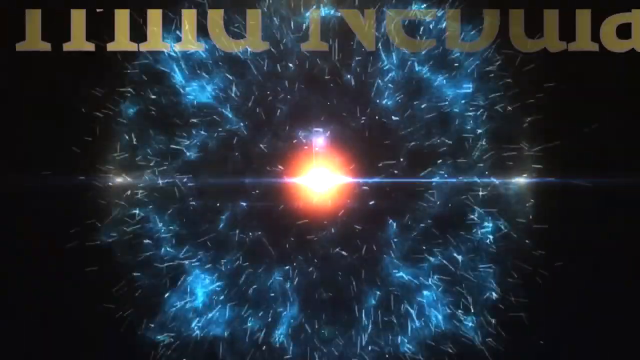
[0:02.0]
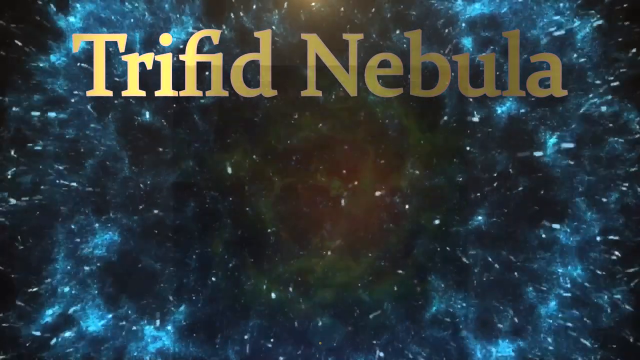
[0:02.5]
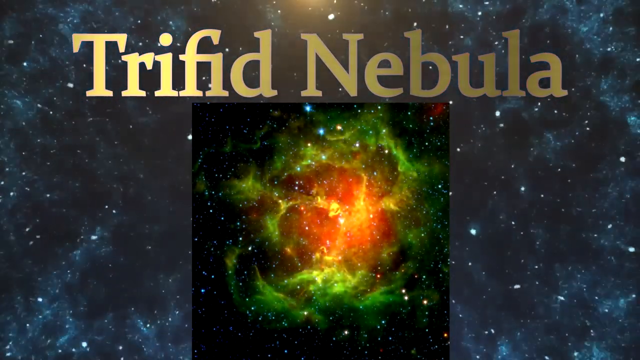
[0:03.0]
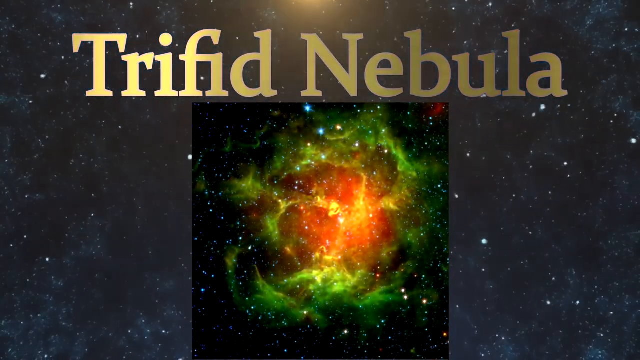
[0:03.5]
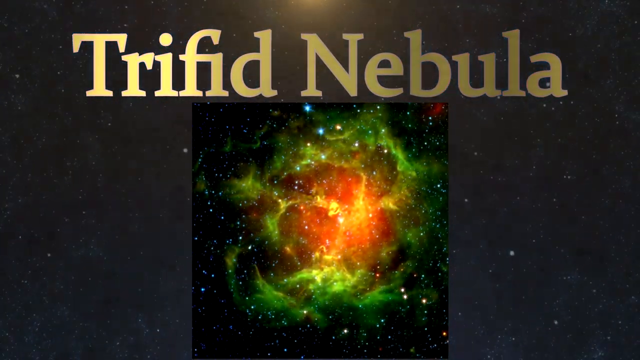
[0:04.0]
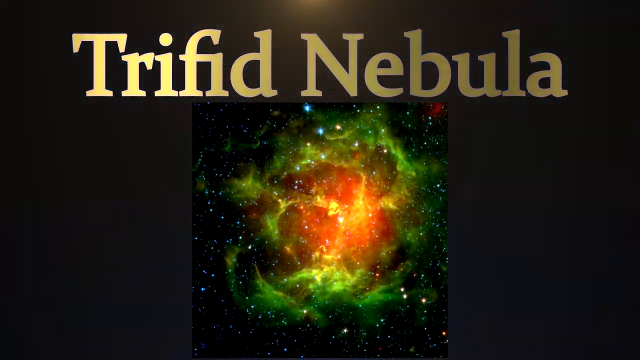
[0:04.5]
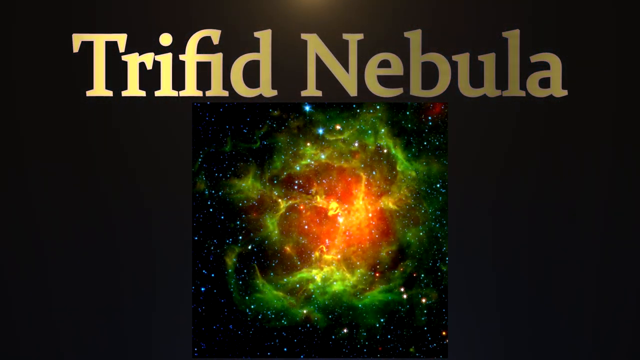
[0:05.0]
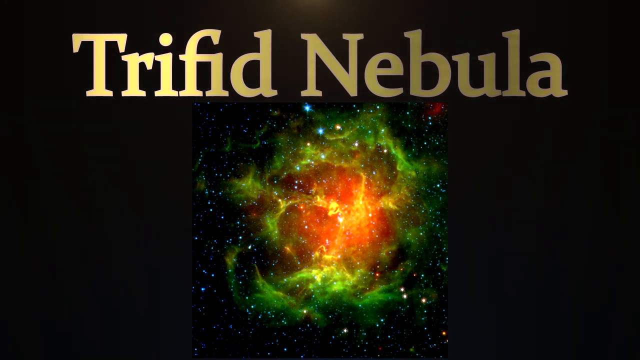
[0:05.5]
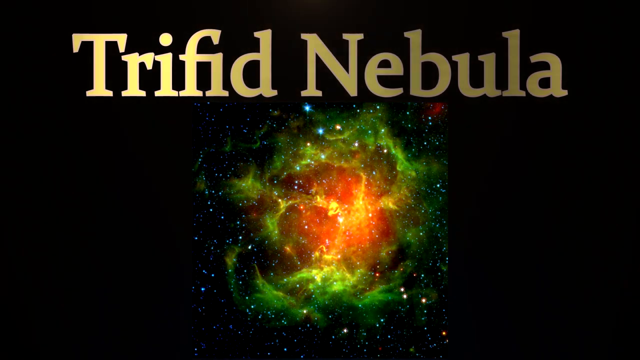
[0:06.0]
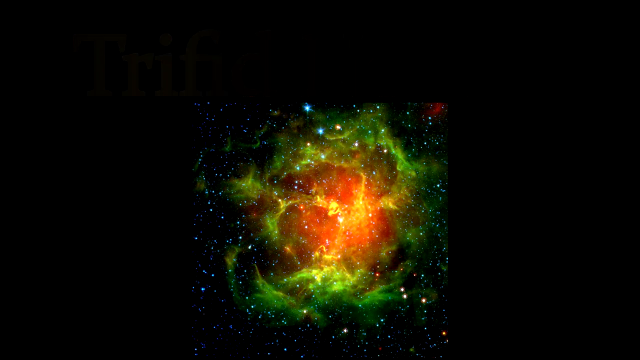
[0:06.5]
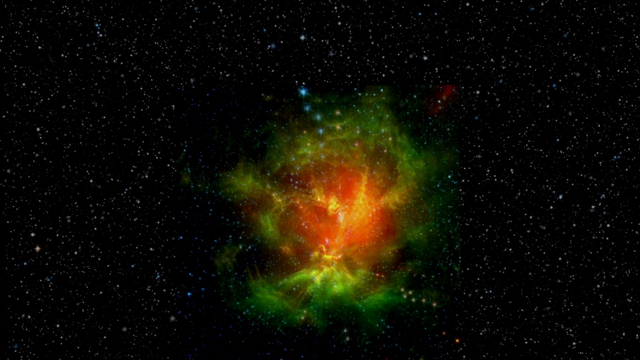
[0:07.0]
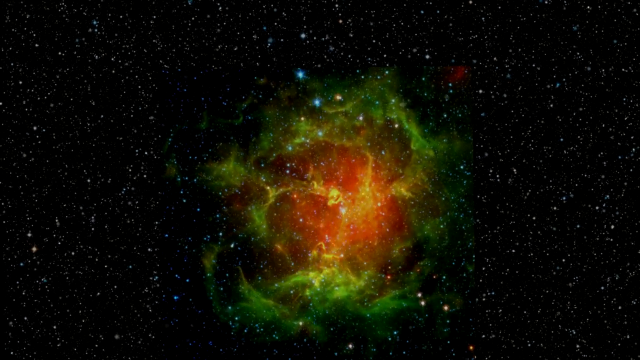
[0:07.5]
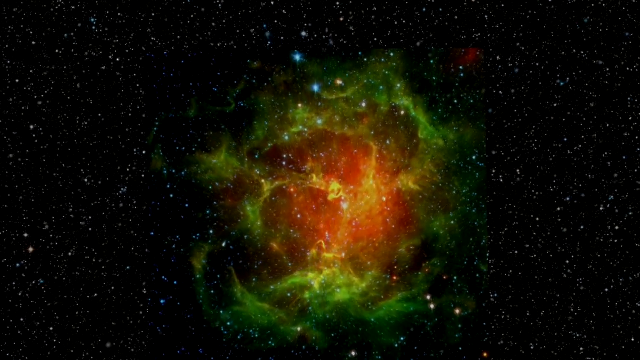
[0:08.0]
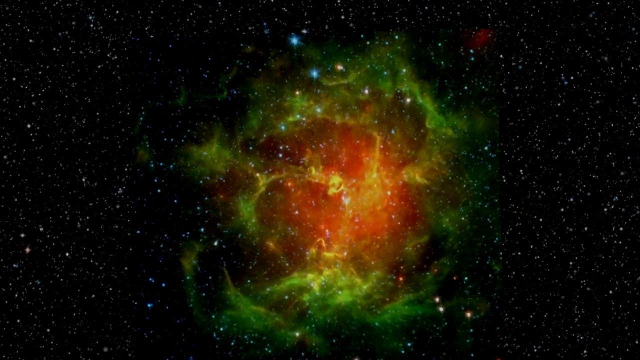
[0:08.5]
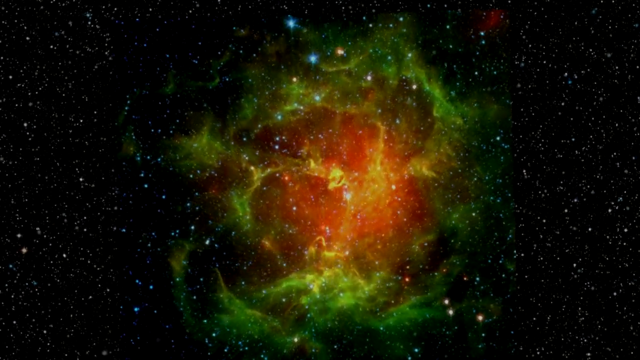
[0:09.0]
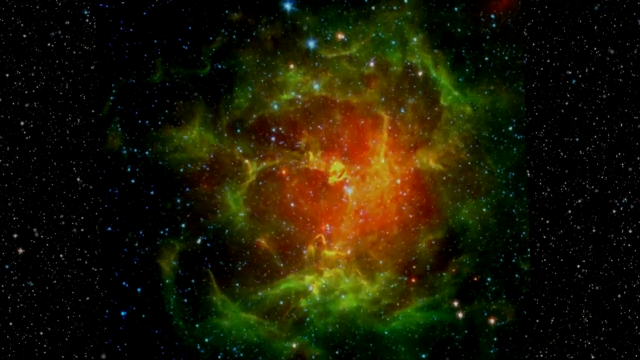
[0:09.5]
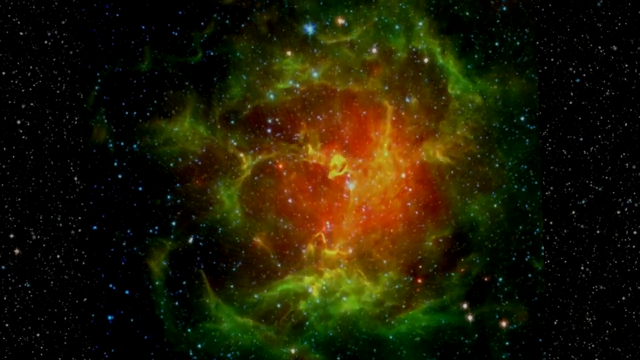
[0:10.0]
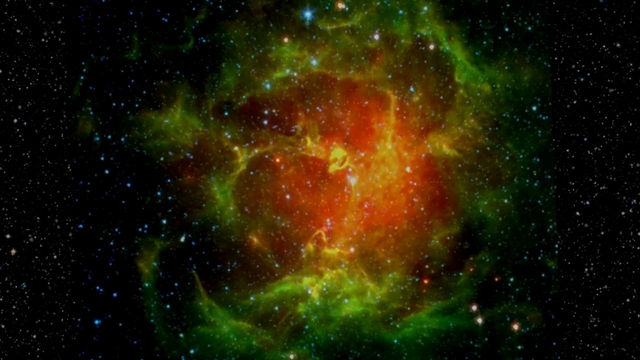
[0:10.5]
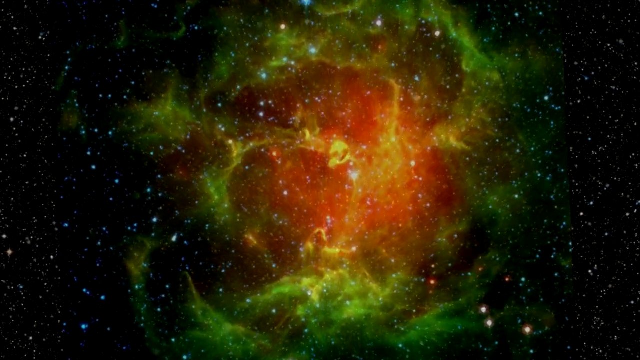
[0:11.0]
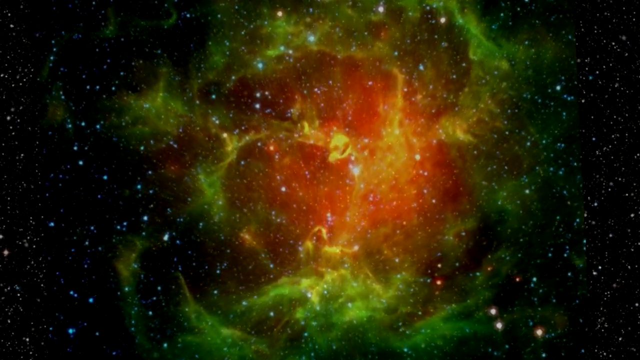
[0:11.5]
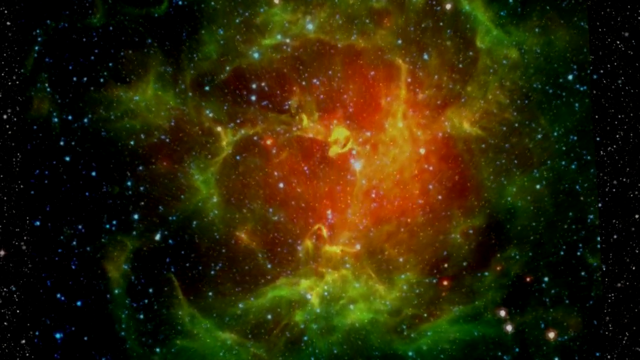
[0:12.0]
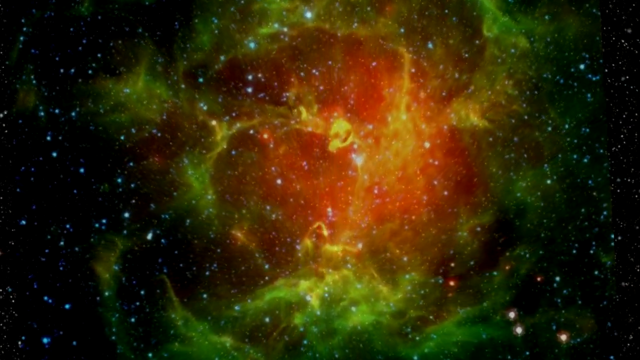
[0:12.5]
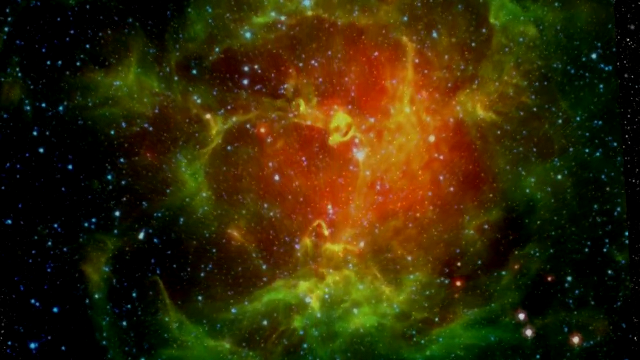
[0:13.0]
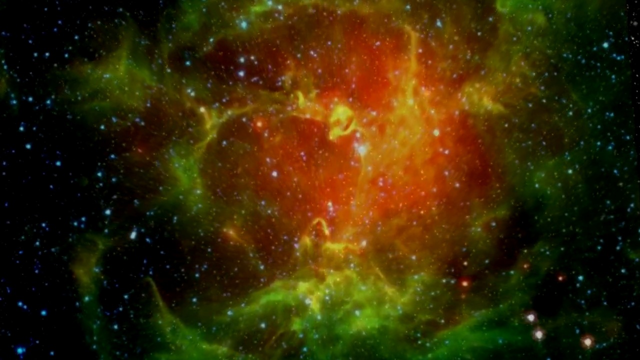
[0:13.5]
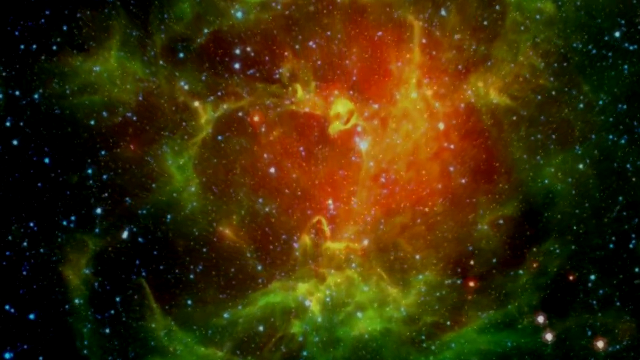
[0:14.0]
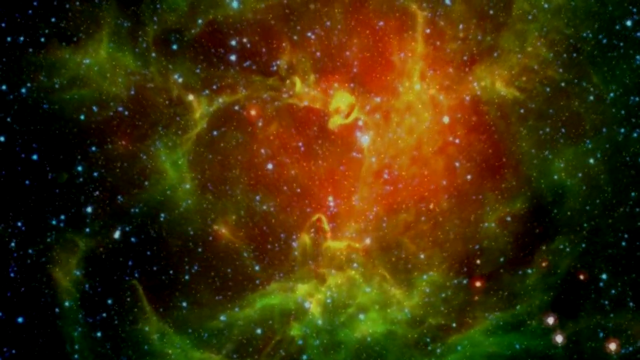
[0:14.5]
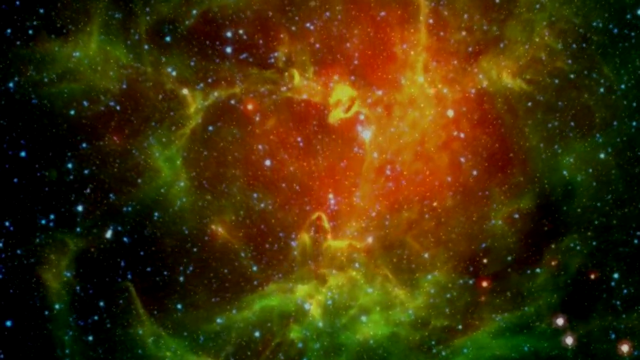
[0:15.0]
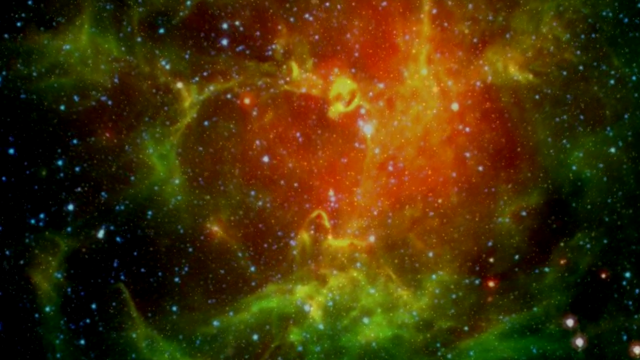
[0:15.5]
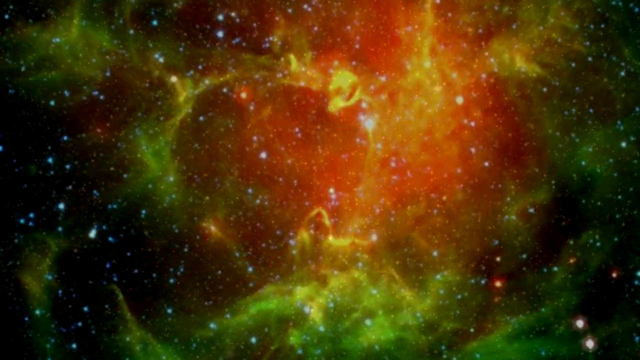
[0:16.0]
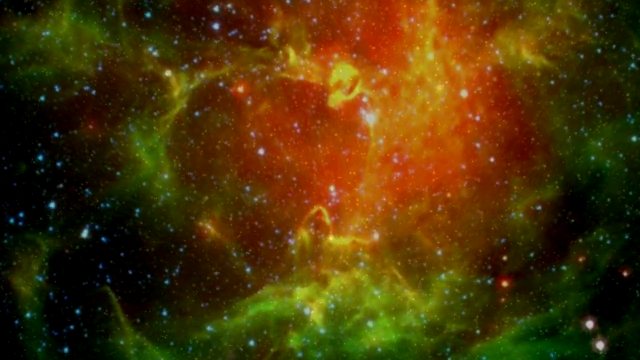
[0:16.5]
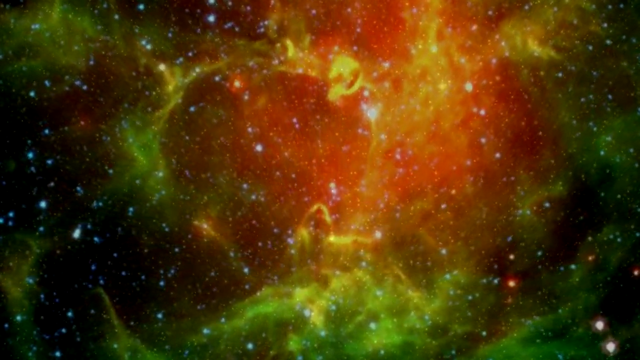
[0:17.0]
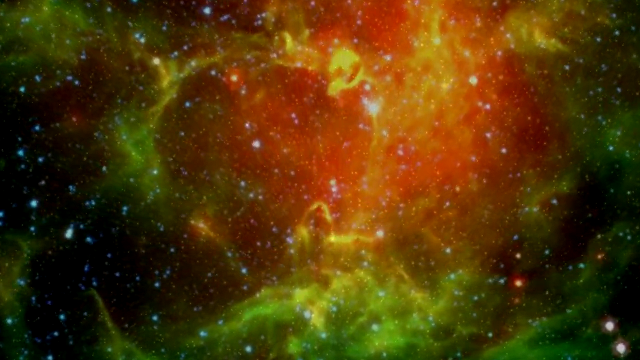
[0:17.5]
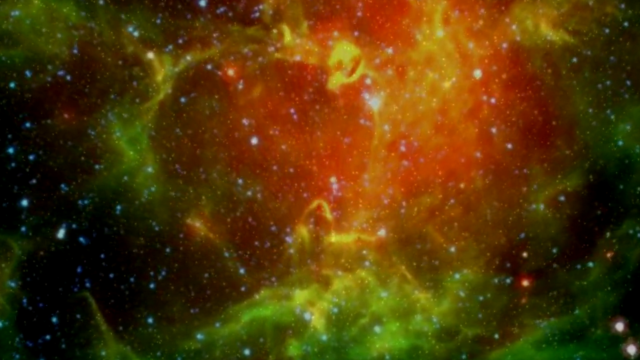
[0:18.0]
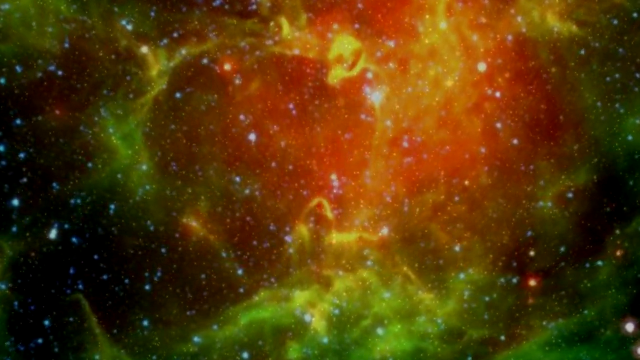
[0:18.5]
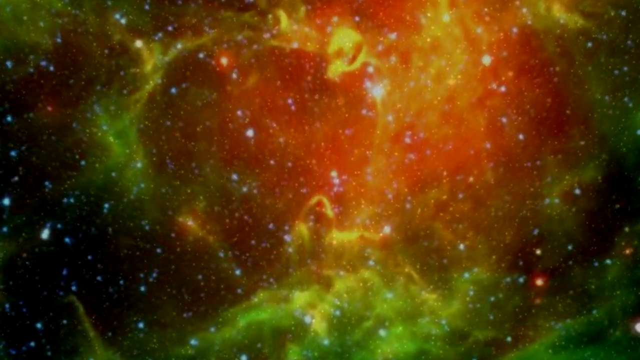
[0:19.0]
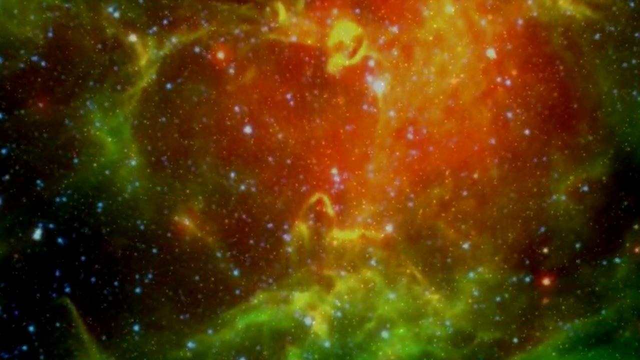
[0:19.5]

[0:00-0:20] The video opens with the words "trifid nebula" in what looks like gold, spelled t-r-i-f-i-d. The image shows a nebula: the whole background is black except for the very center of the screen, which is a kind of yellow-orange, yellow first. Spanning up from there it turns orange, almost a rusty brown, and then green, and past that are dots of blue stars. The words disappear, and the image grows larger and larger on the screen as if it is coming straight at the viewer, showing yellow, red and green with stars around it. It is presumably the Trifid Nebula.